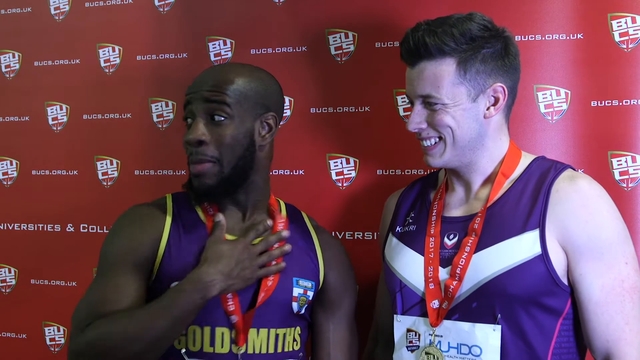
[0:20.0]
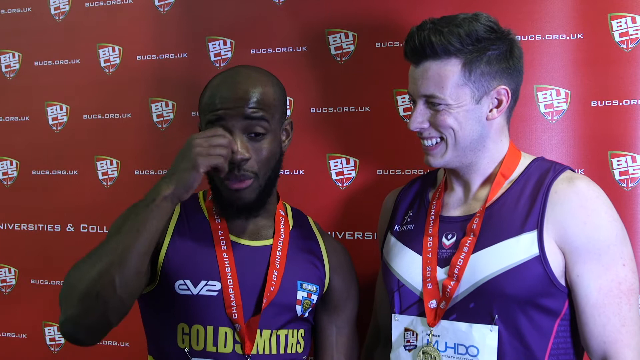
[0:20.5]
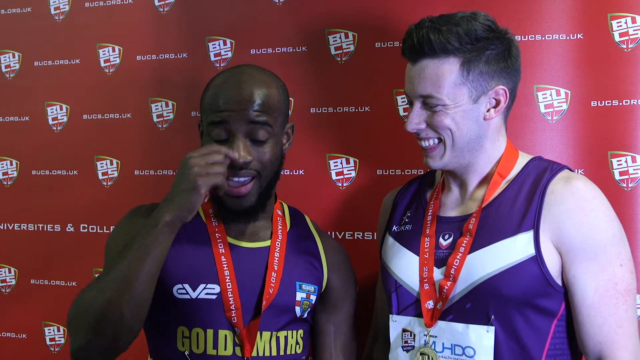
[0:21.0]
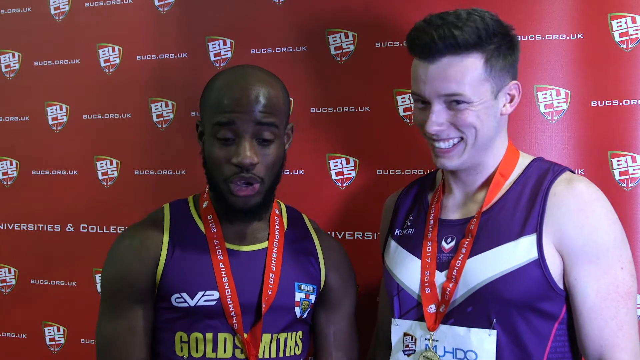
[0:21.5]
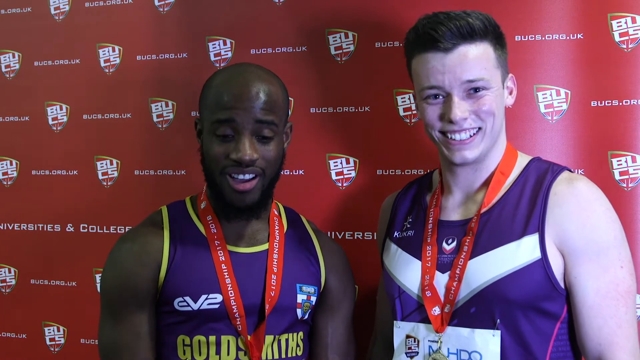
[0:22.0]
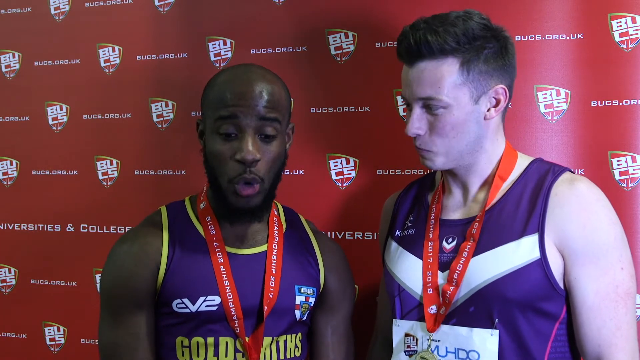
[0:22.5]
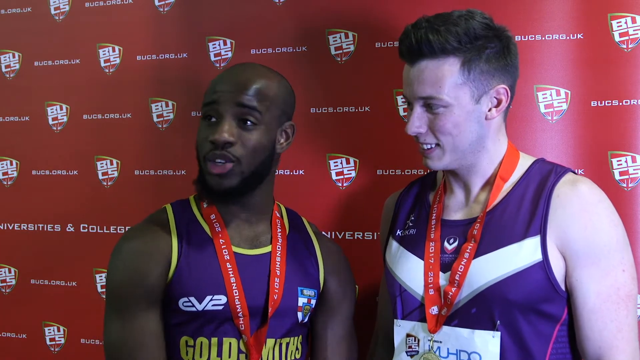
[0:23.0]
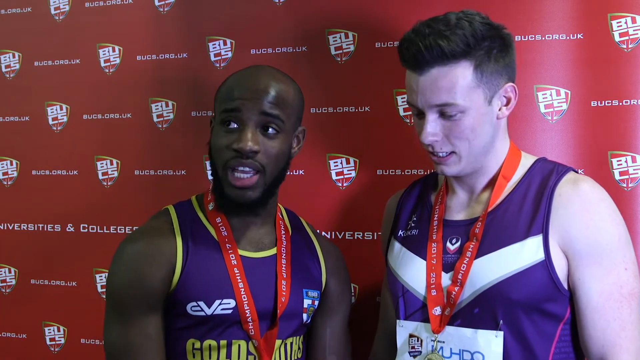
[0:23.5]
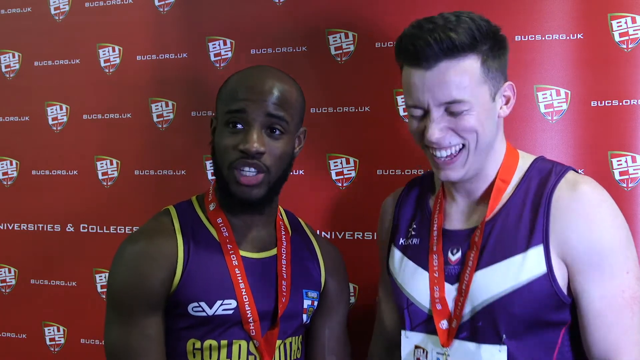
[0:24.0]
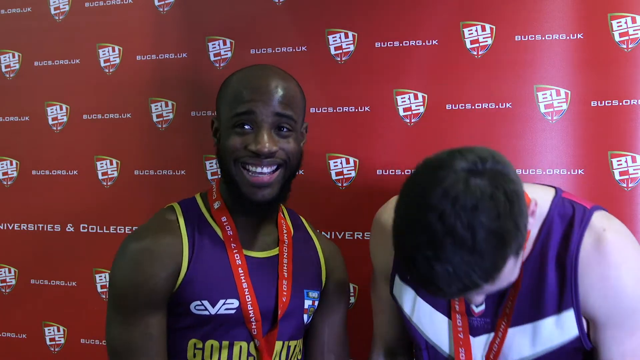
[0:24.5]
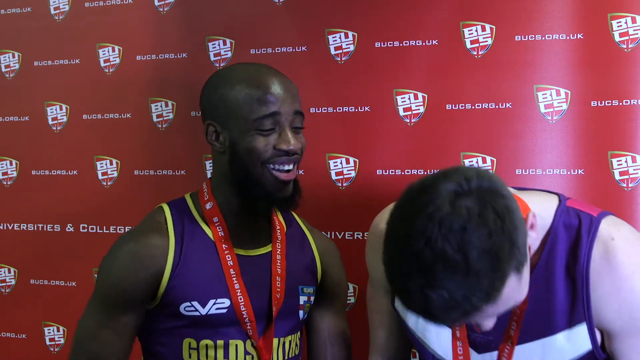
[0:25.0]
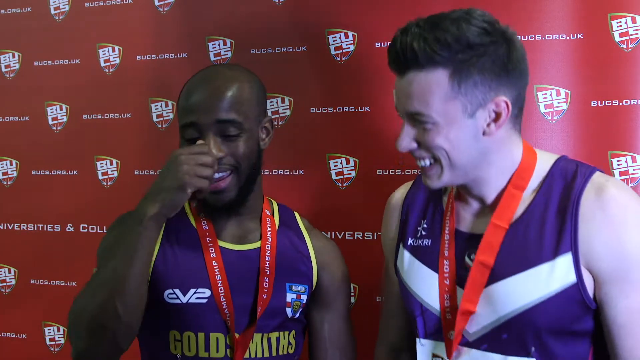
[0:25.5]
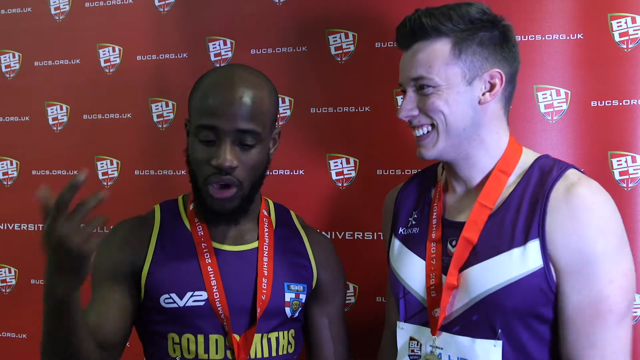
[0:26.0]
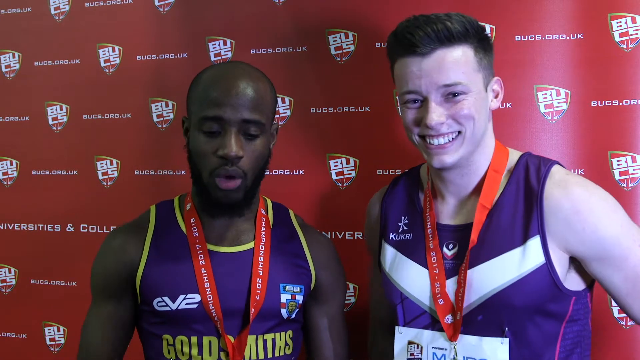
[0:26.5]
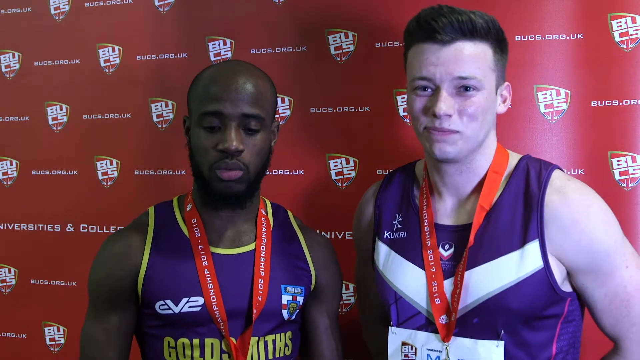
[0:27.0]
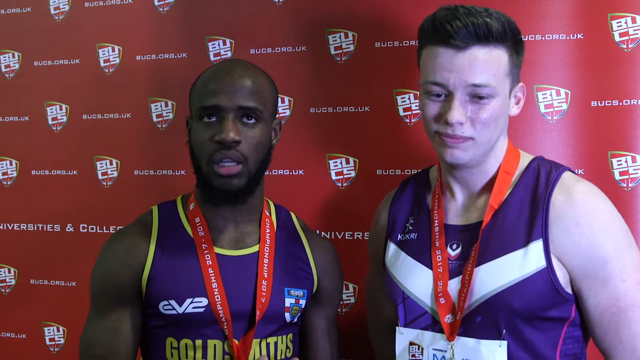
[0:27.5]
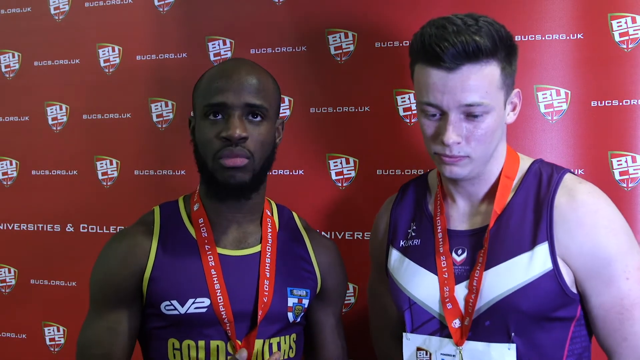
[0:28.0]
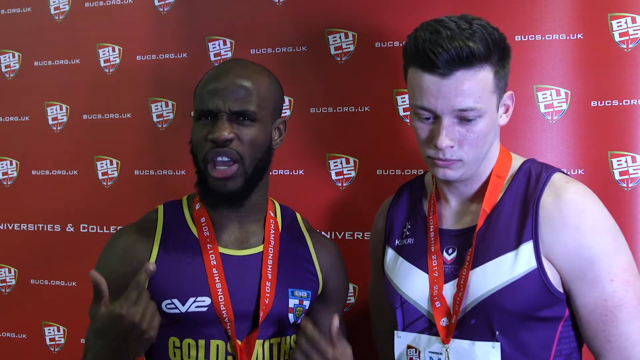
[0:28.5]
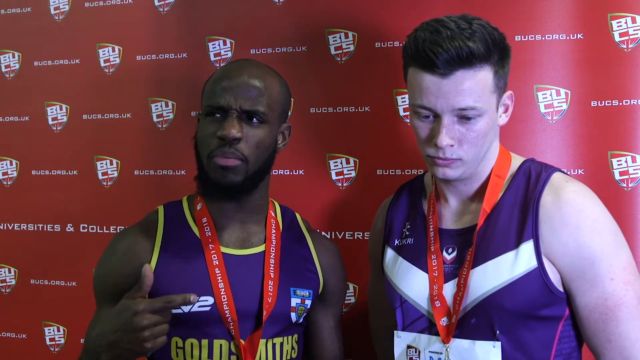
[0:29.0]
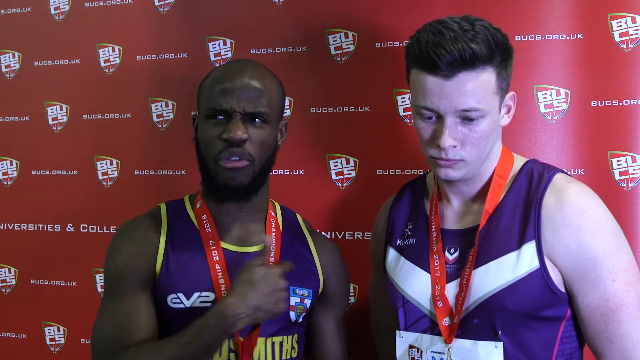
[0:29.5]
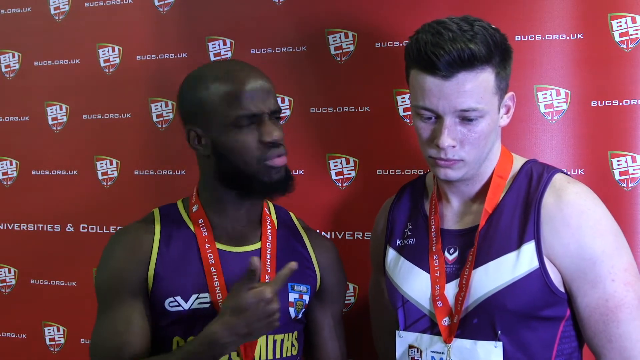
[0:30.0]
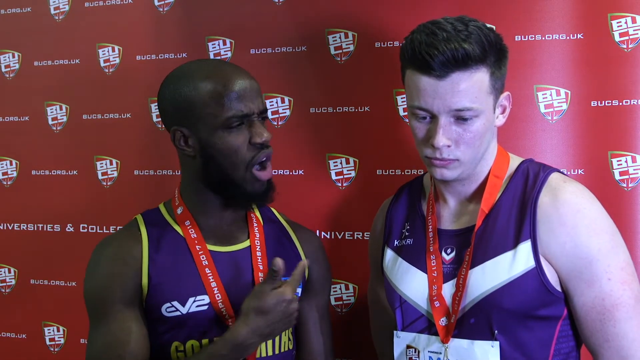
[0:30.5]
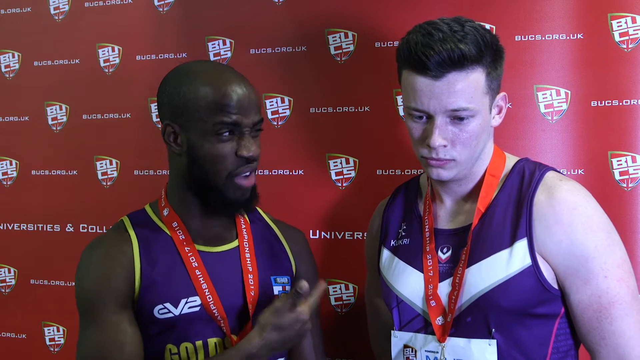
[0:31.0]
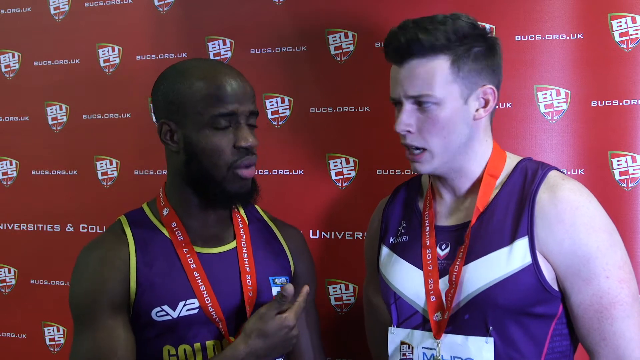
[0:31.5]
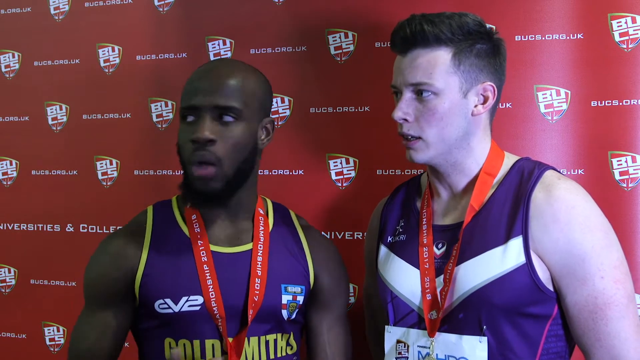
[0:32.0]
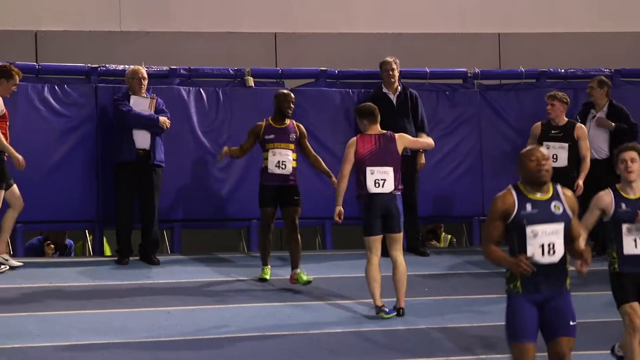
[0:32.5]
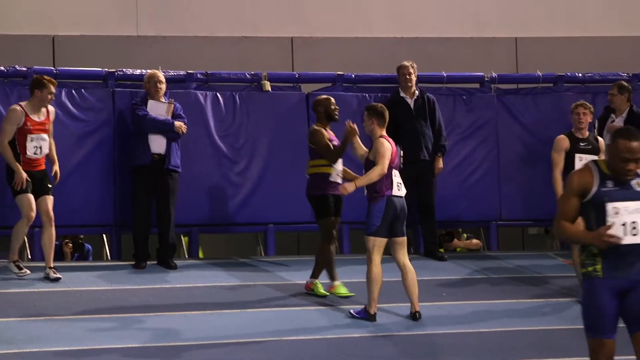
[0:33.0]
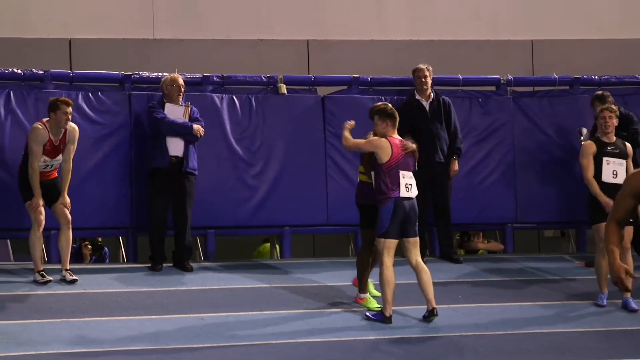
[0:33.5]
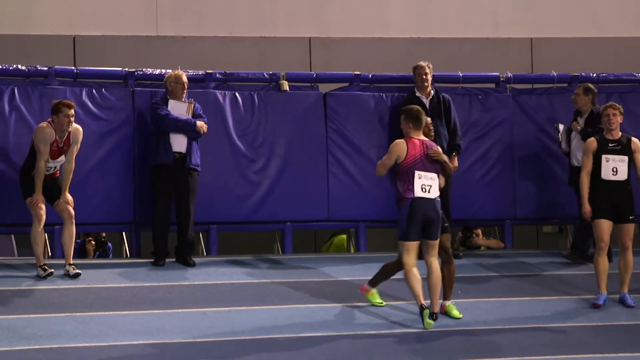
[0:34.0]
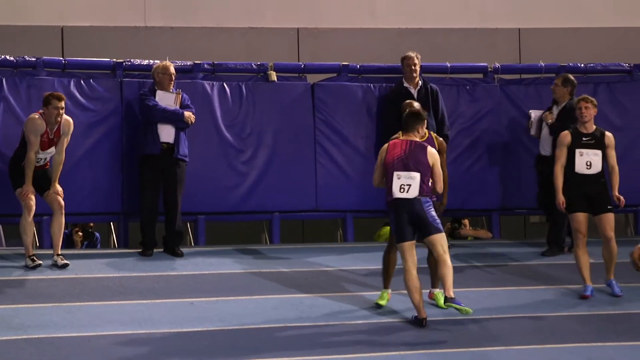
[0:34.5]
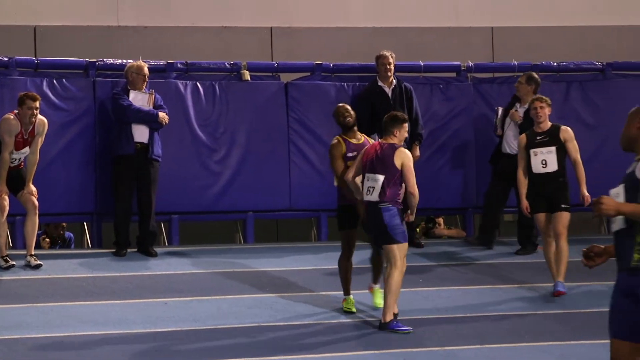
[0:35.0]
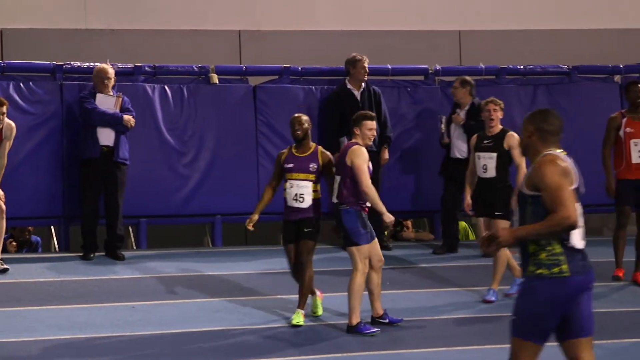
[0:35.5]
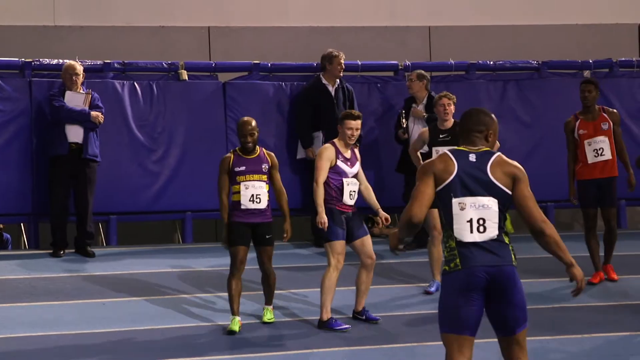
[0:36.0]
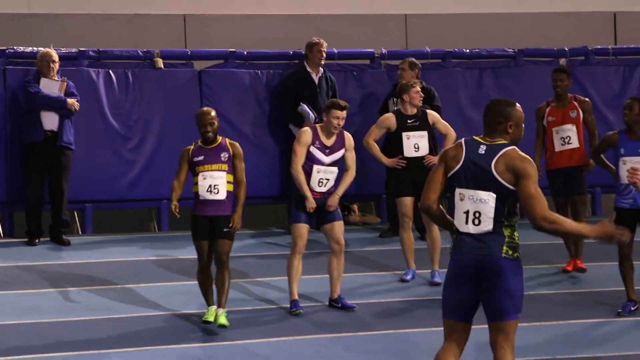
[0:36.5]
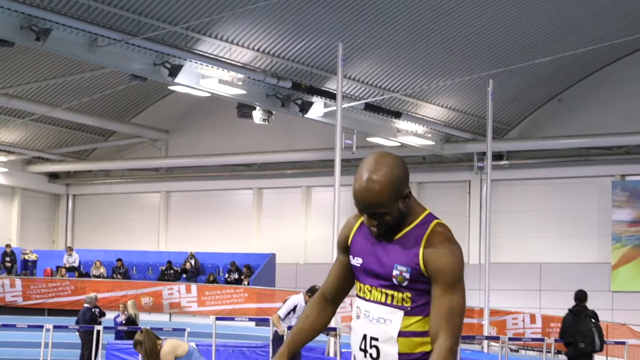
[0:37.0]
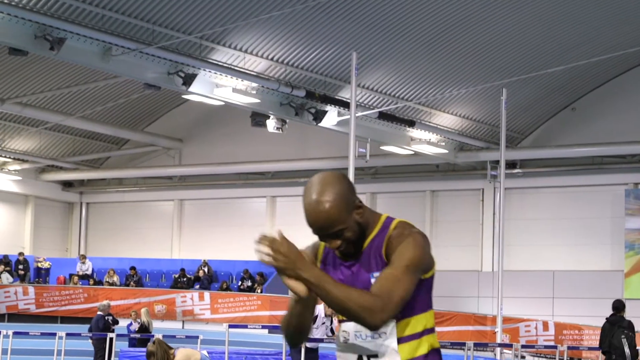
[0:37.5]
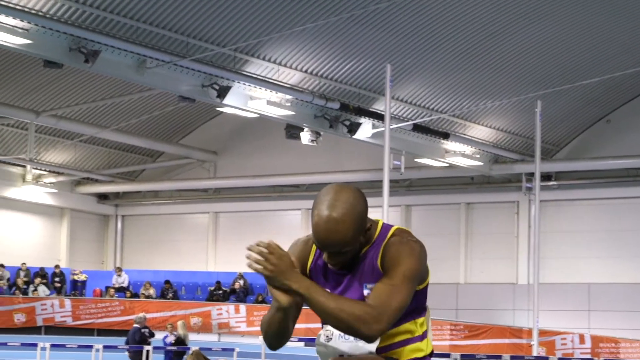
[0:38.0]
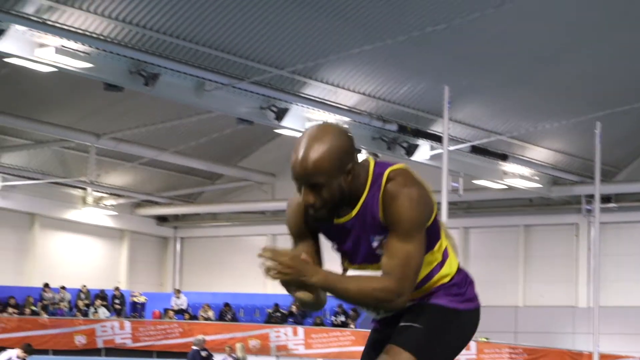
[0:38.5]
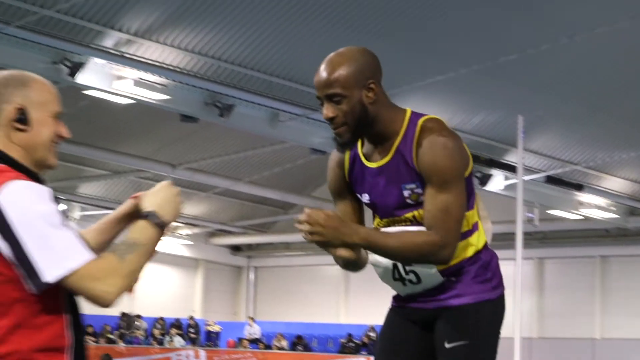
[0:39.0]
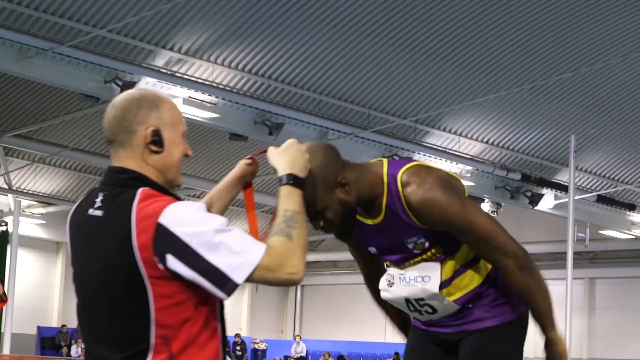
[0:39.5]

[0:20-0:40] Two athletes stand side by side against a red backdrop, dressed in sleeveless tank tops in purple or with different designs, both with red-ribboned medals around their necks. The man on the left is slightly shorter, a bald black man with a beard; the man on the right is taller, a white man with hair on his head. The black man speaks while the man on the right laughs, bending his head forward and showing a bright smile. He then stops laughing as the man on the left continues to speak and gesture to him. Next, the two men are among other athletes, hugging each other in celebration, with two other athletes to their left and right and two officials behind them leaning against purple padded barriers. More athletes come onto the scene, including a man with the number 18 on his back. The camera then focuses on the bald, bearded black athlete, who applauds as he receives his medal, leaning forward while it is hung around his neck by a man in a white shirt and dark pants.